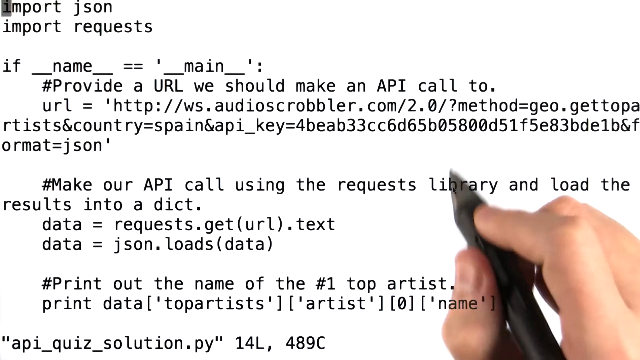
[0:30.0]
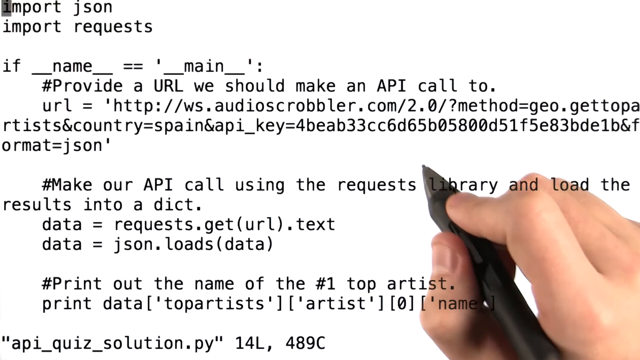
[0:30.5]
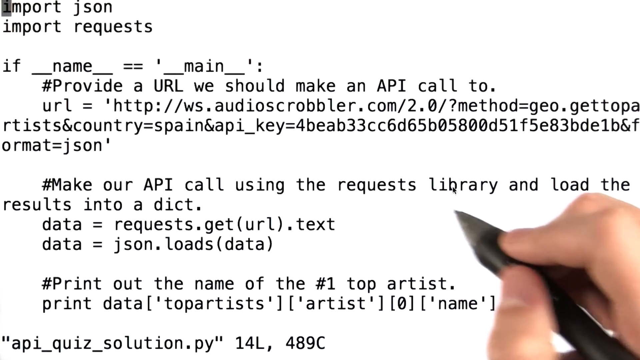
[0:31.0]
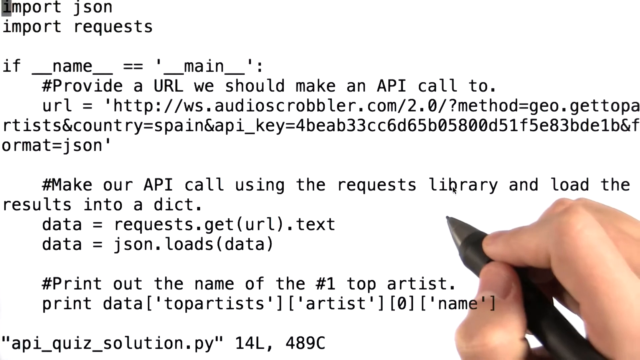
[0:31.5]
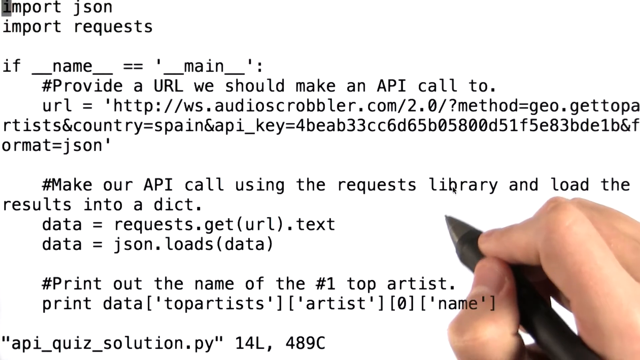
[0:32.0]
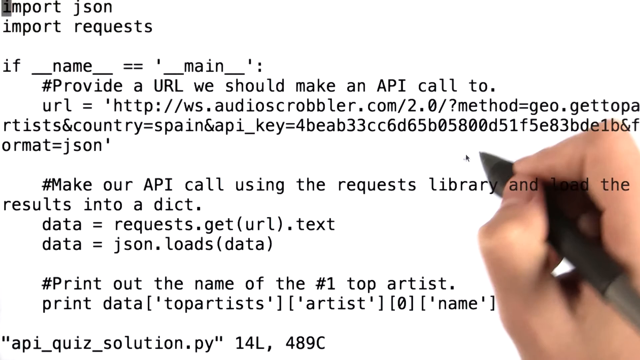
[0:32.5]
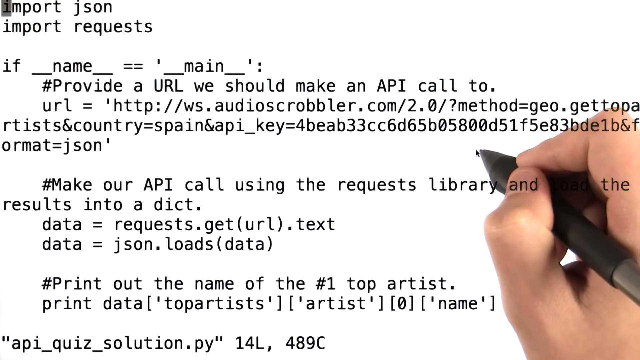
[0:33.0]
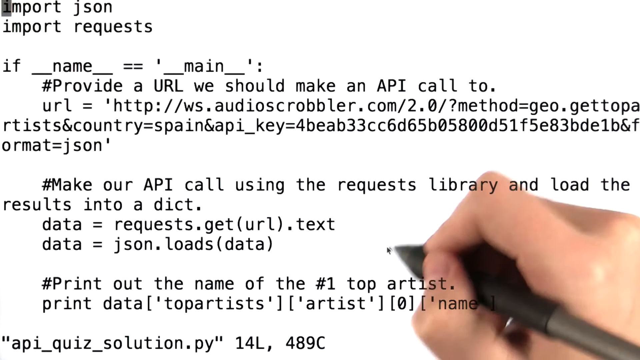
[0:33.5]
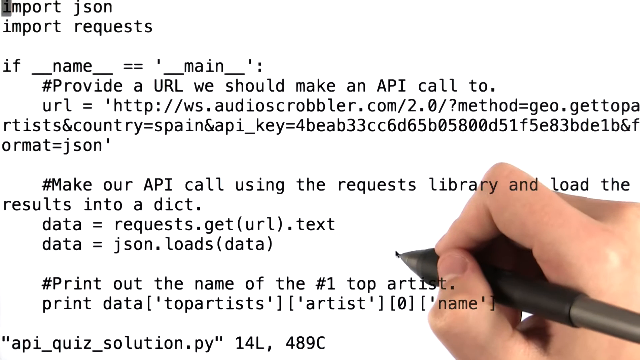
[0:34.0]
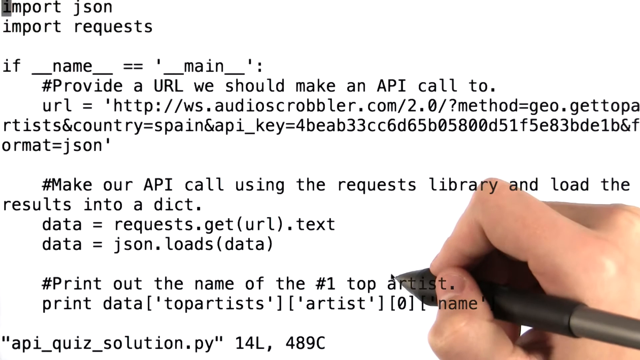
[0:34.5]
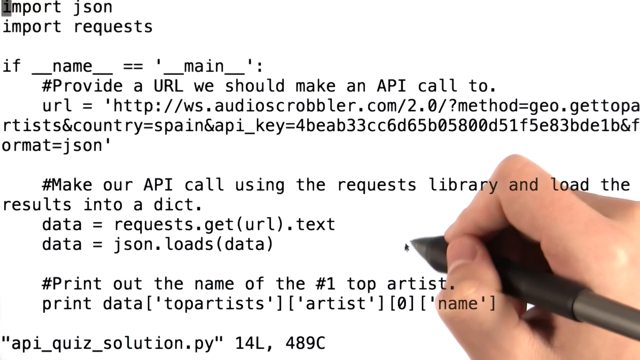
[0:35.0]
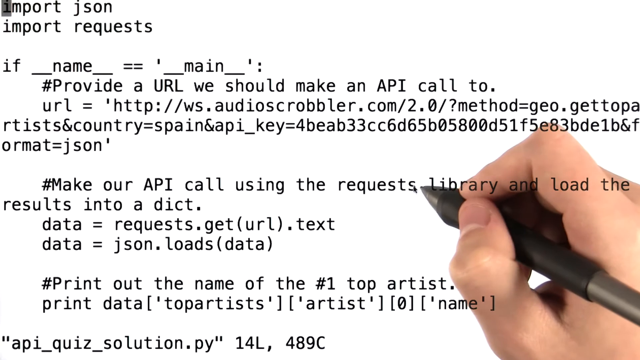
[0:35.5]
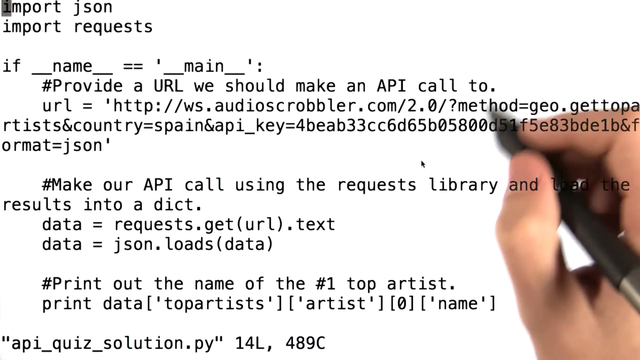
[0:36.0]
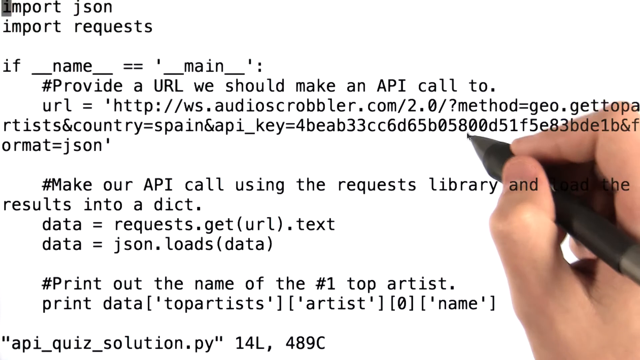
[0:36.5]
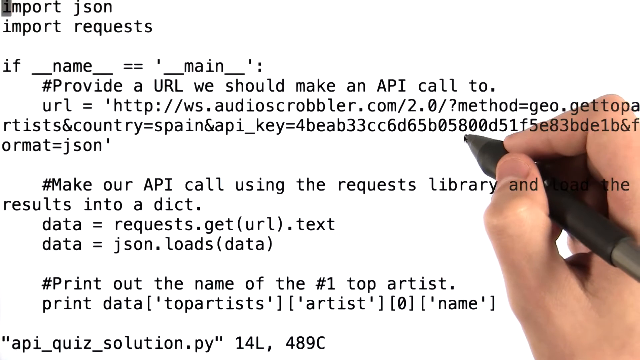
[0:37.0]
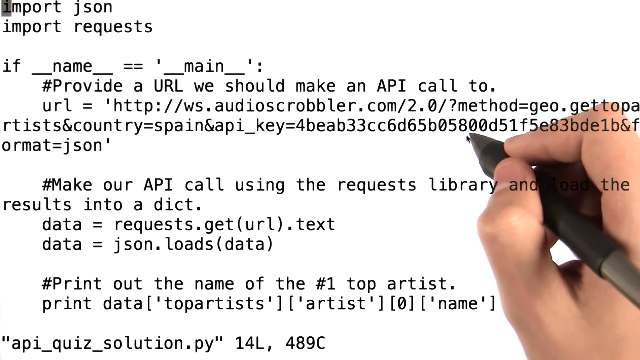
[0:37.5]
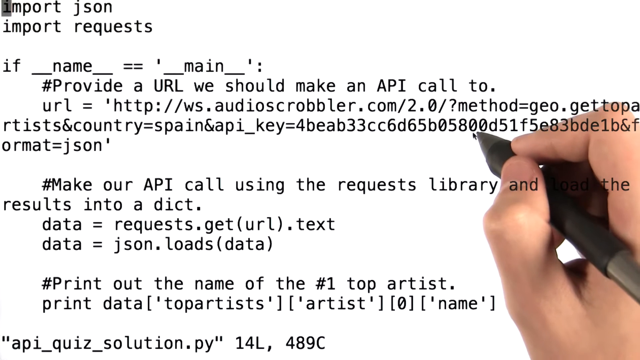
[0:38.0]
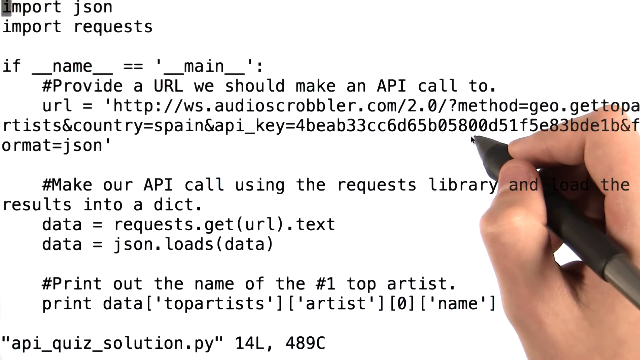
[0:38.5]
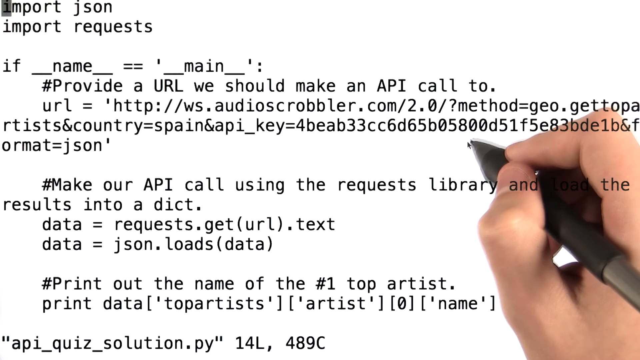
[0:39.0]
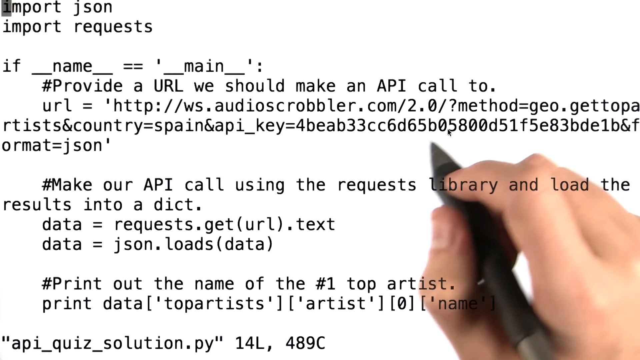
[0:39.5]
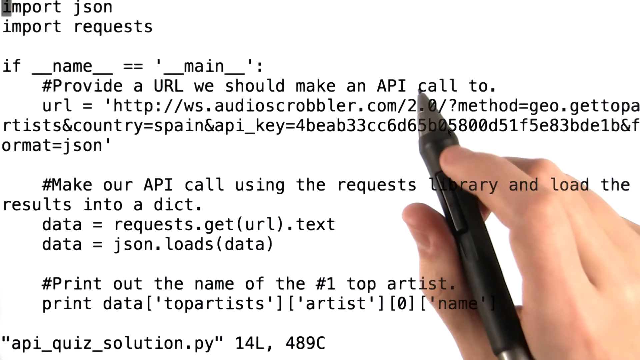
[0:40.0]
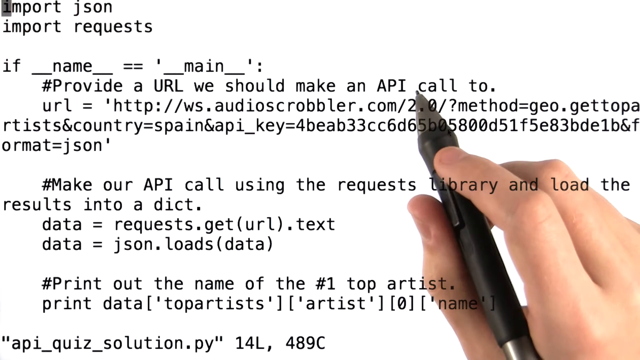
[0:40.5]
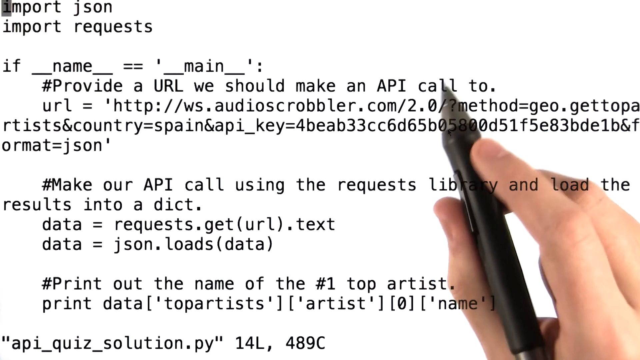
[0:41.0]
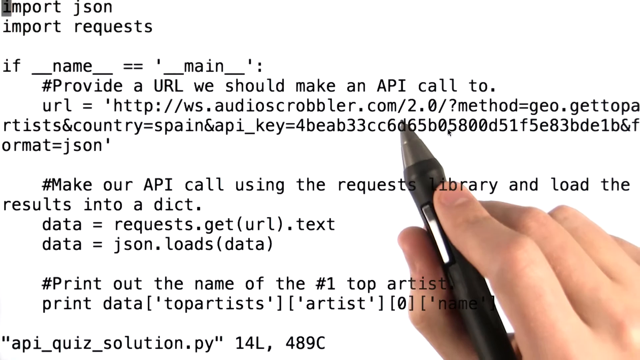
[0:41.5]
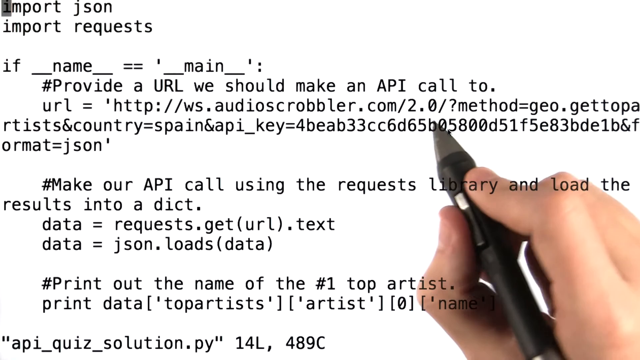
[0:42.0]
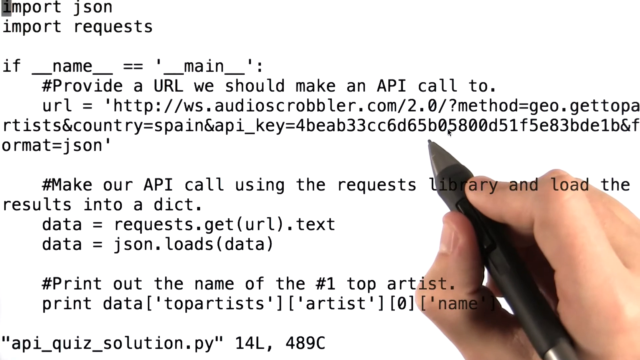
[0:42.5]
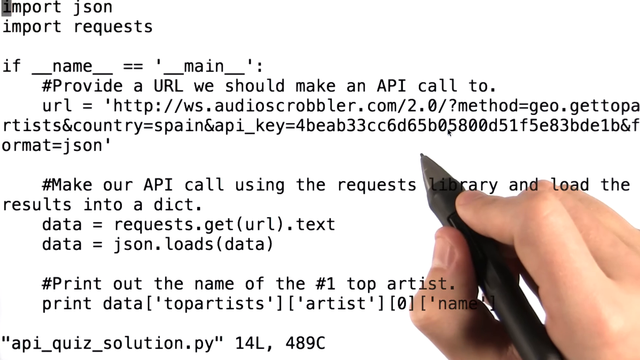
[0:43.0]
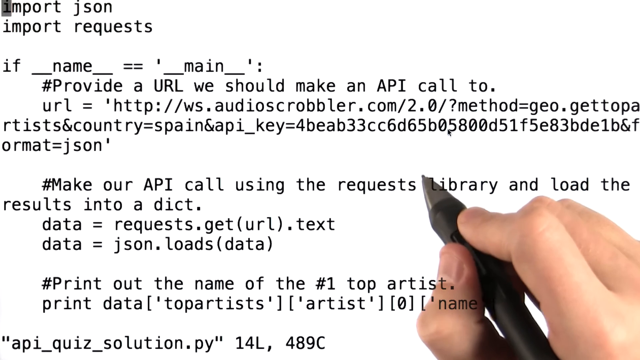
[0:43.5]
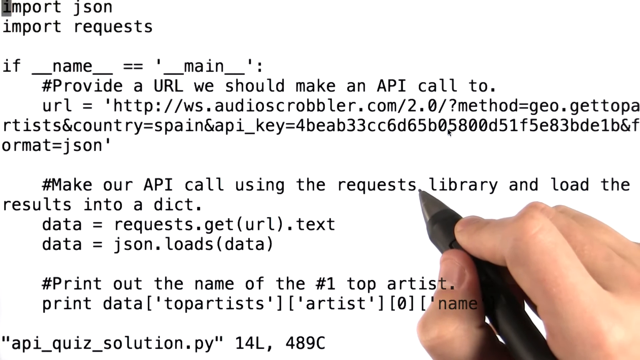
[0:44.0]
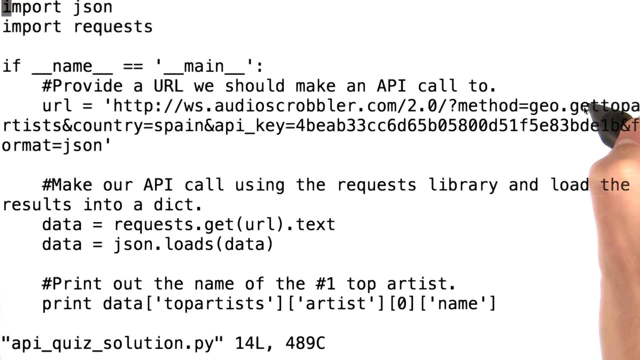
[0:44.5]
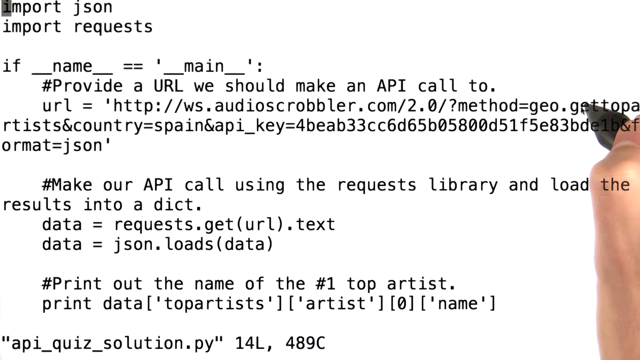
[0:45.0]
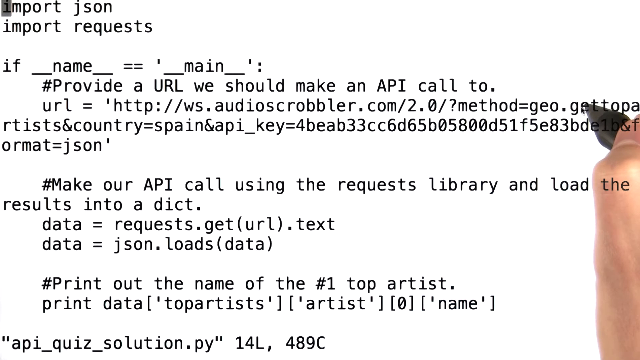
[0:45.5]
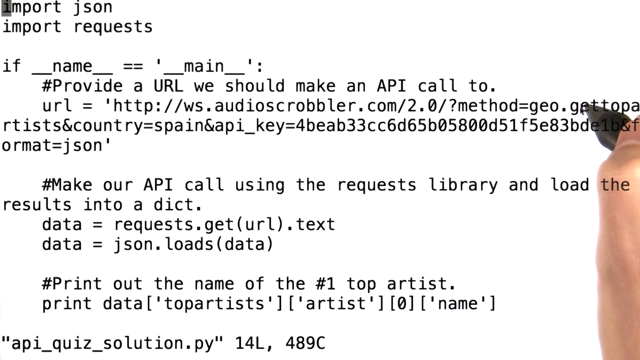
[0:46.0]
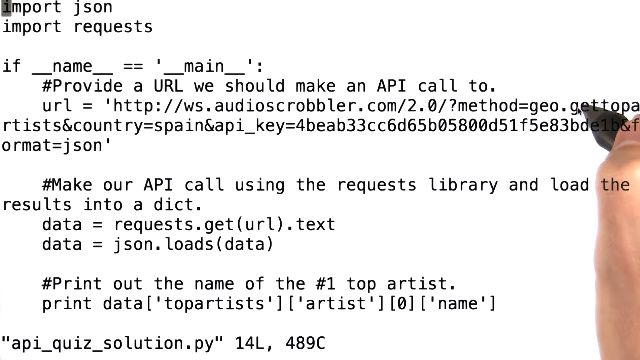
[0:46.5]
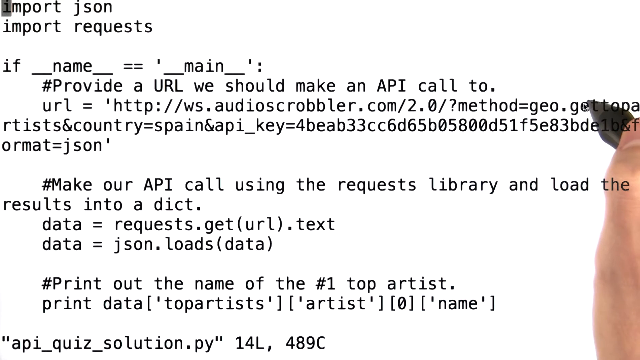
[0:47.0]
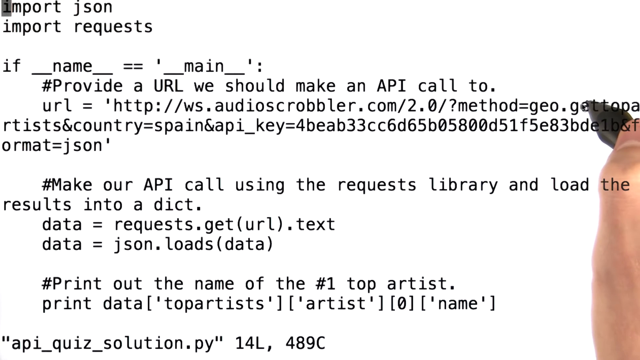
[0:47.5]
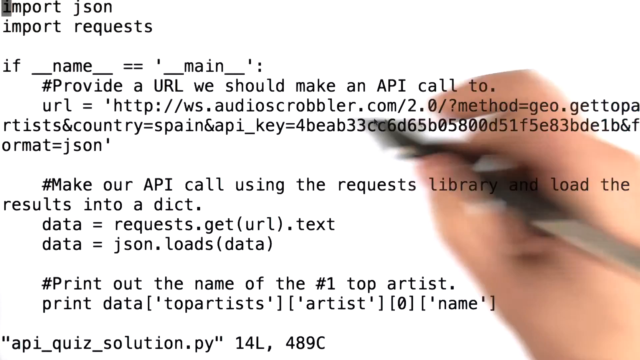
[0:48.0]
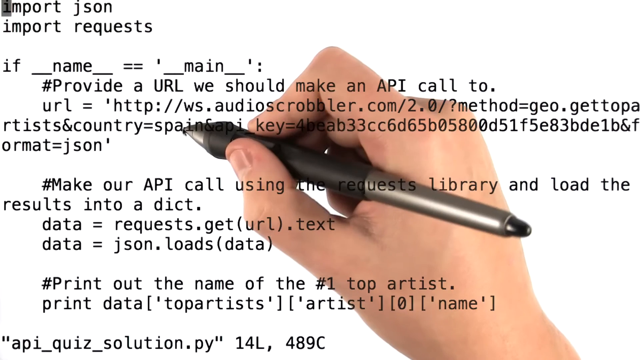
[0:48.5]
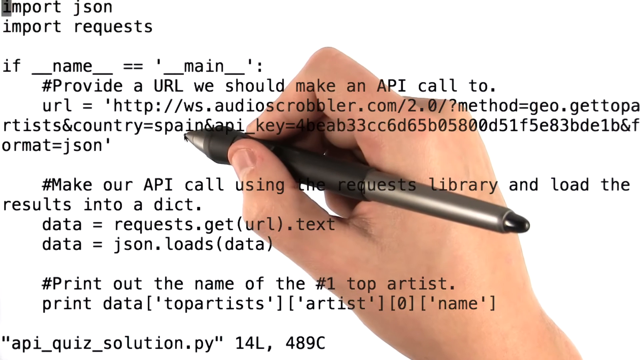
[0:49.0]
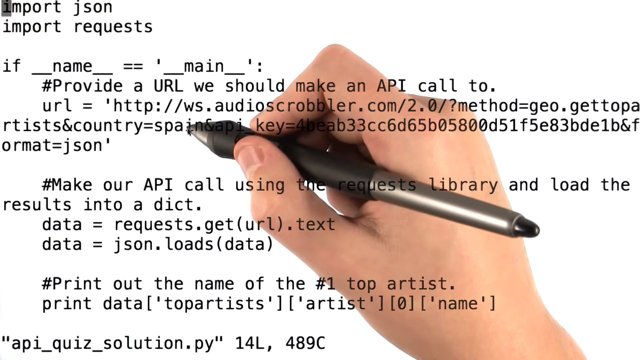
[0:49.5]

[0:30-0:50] The writing continues on the board, including "print out the name of" and an opacity value that appears to be 80%. The content seems to involve a library, storing information, printing results and importing requests.